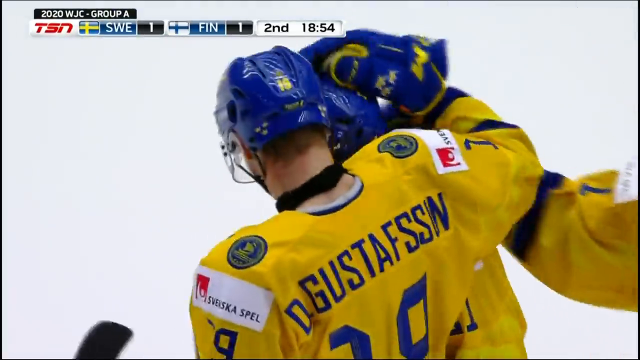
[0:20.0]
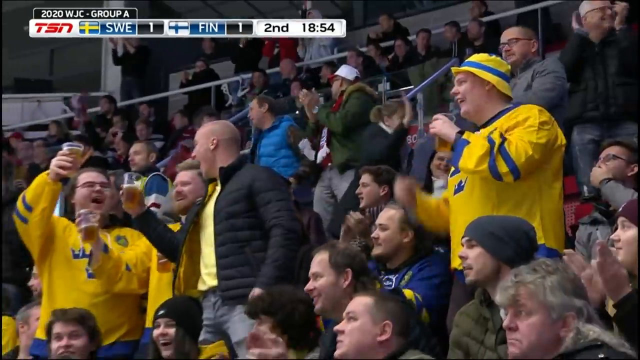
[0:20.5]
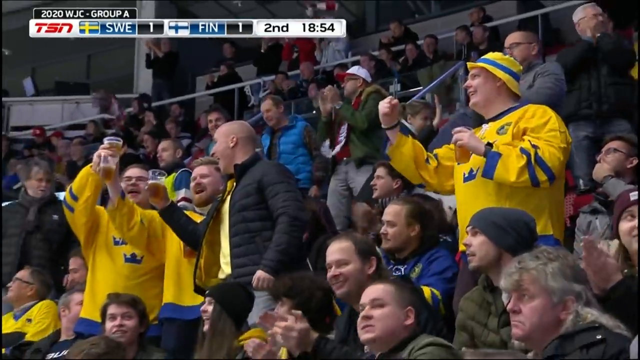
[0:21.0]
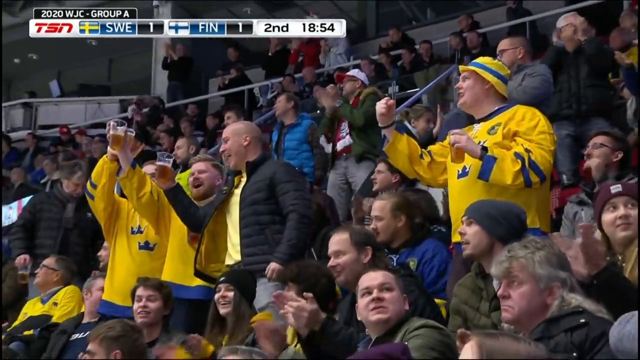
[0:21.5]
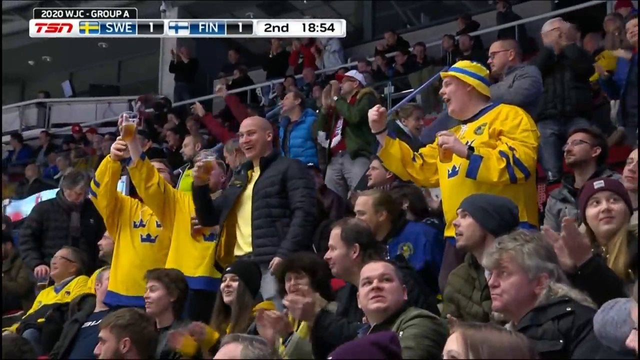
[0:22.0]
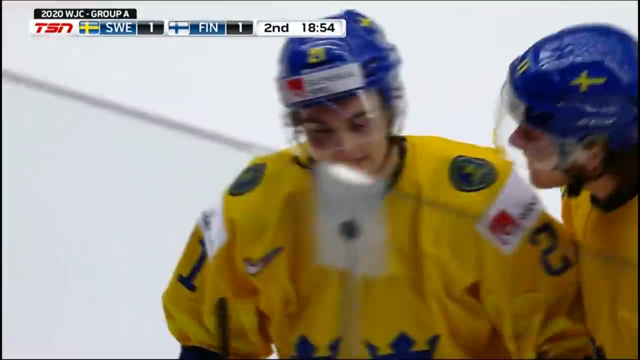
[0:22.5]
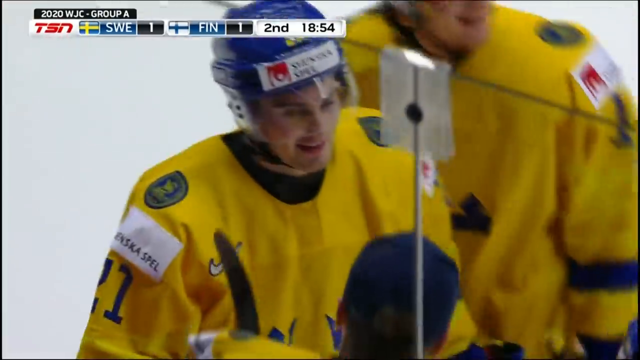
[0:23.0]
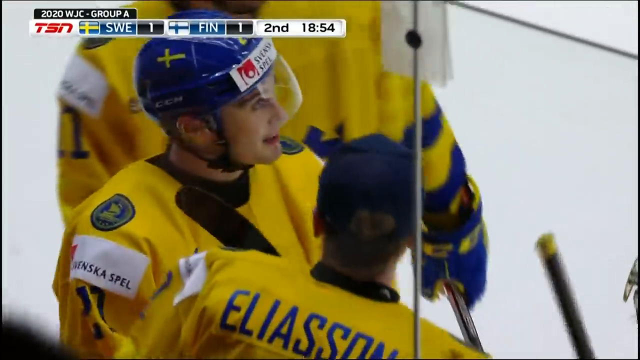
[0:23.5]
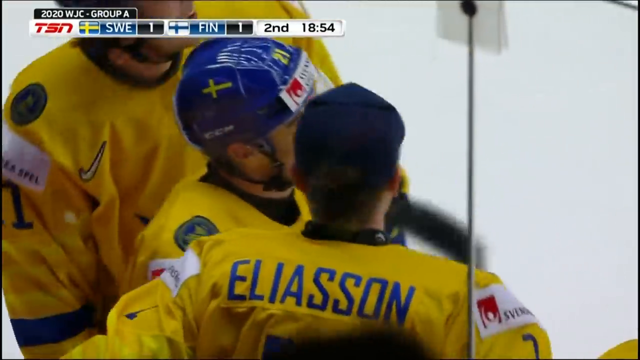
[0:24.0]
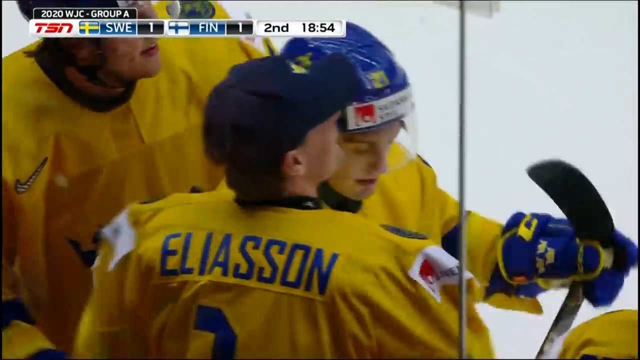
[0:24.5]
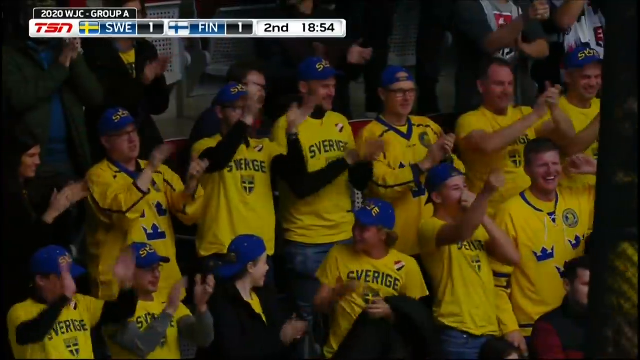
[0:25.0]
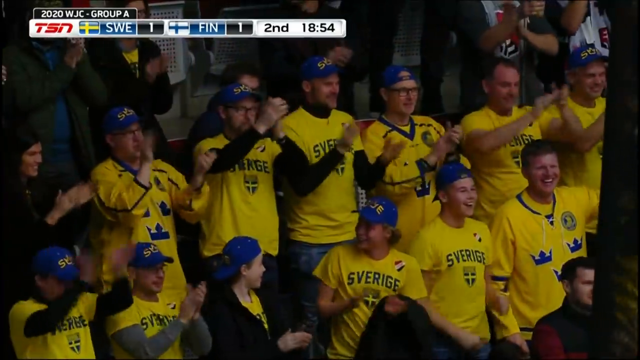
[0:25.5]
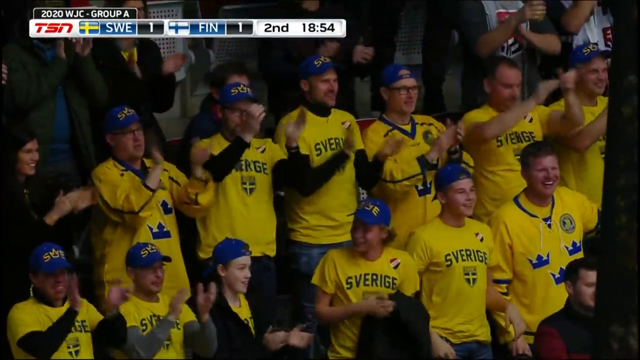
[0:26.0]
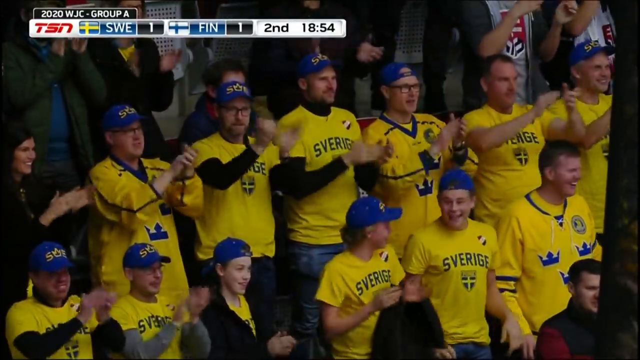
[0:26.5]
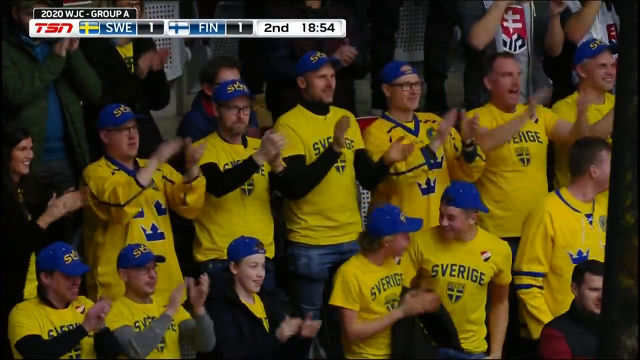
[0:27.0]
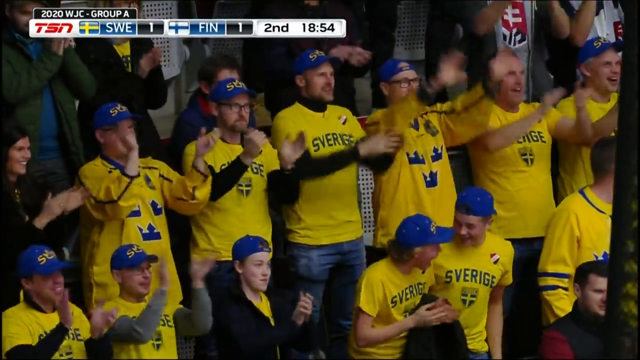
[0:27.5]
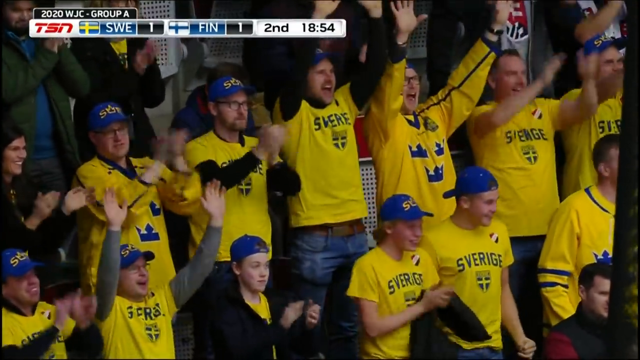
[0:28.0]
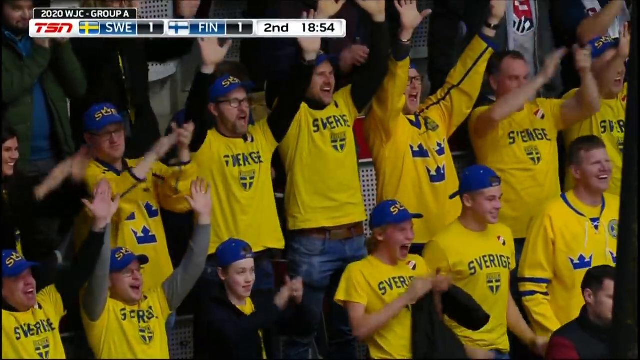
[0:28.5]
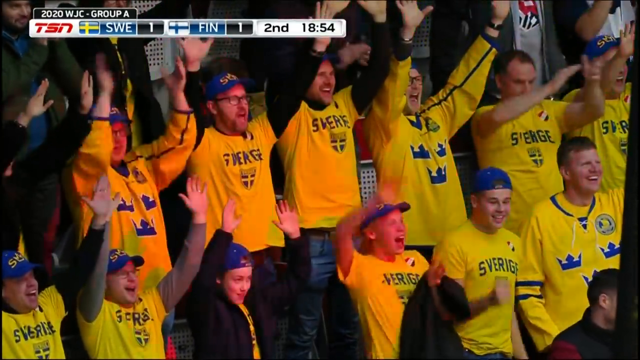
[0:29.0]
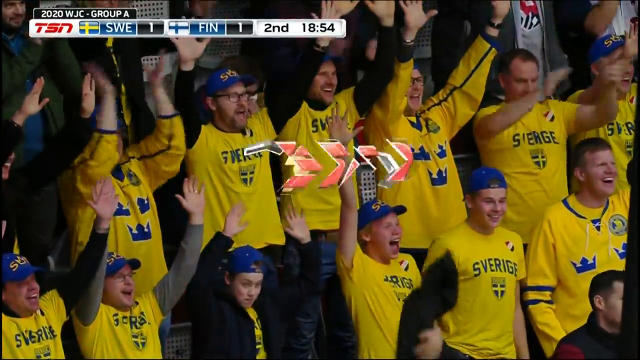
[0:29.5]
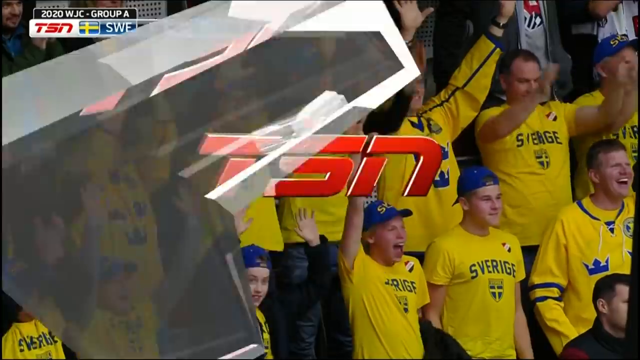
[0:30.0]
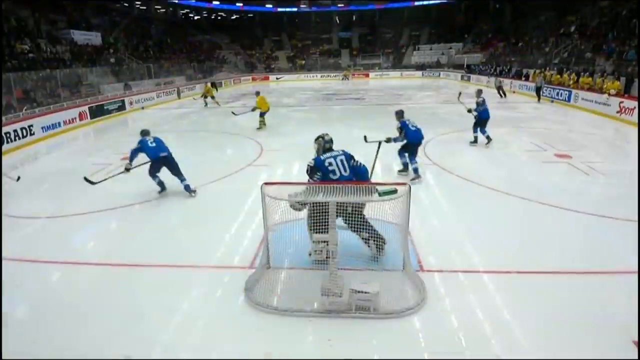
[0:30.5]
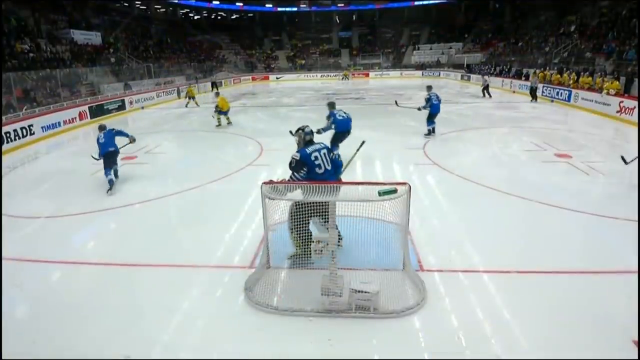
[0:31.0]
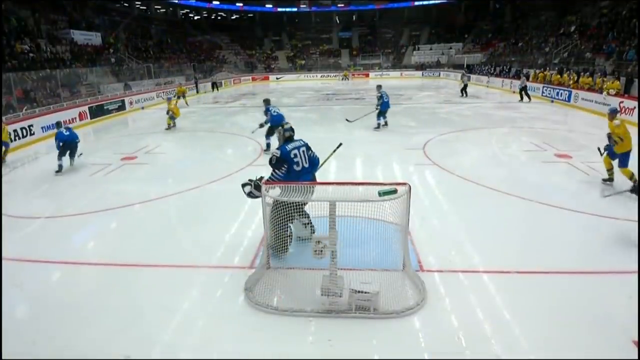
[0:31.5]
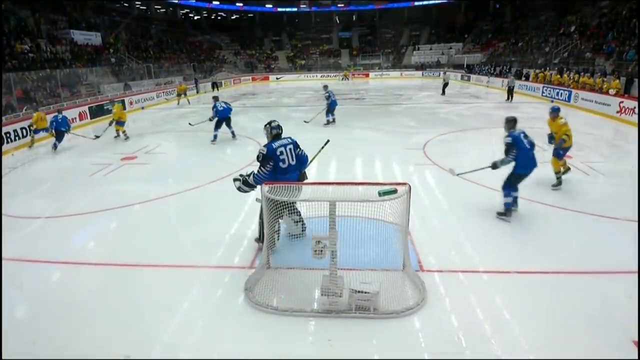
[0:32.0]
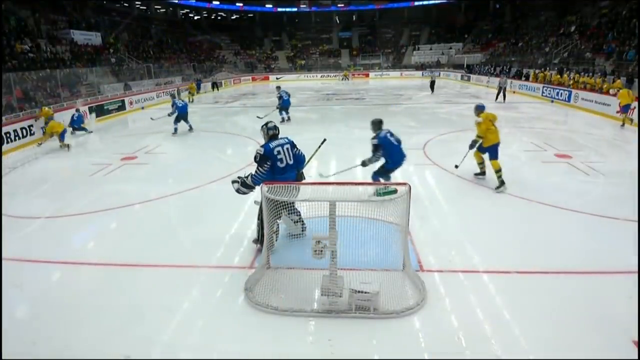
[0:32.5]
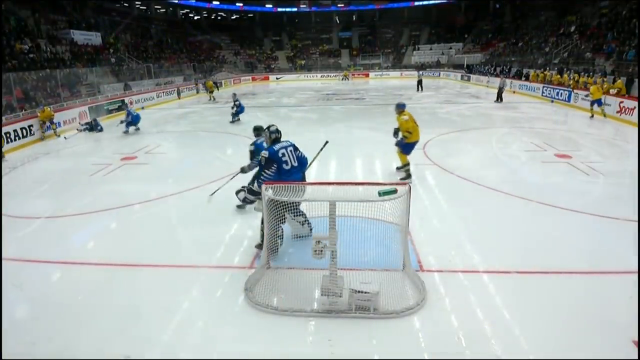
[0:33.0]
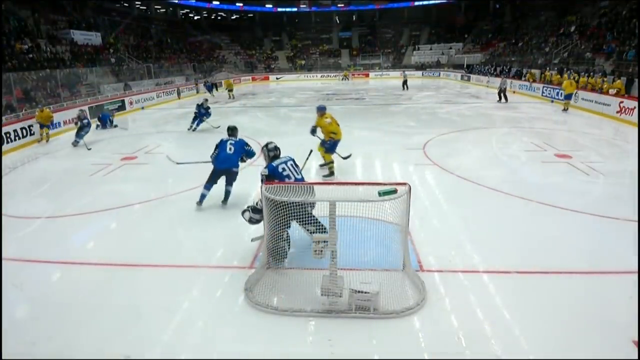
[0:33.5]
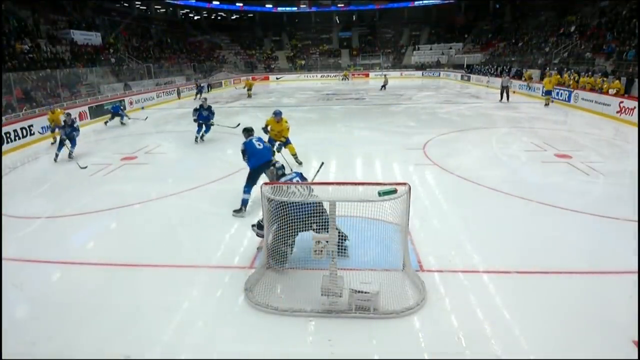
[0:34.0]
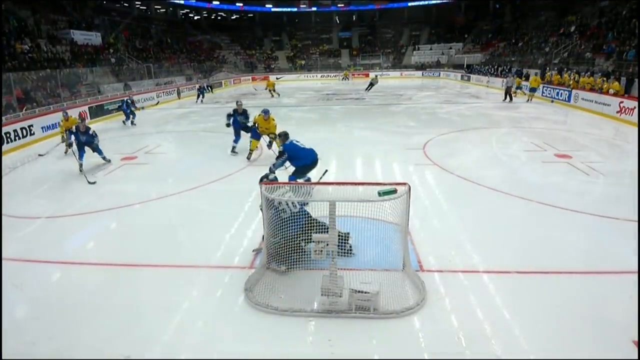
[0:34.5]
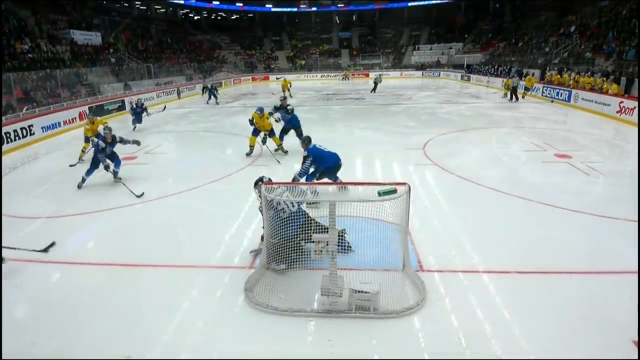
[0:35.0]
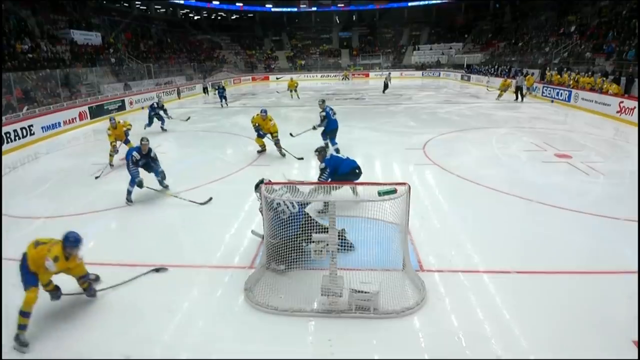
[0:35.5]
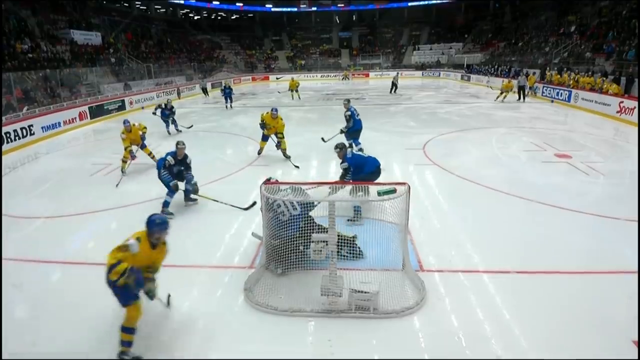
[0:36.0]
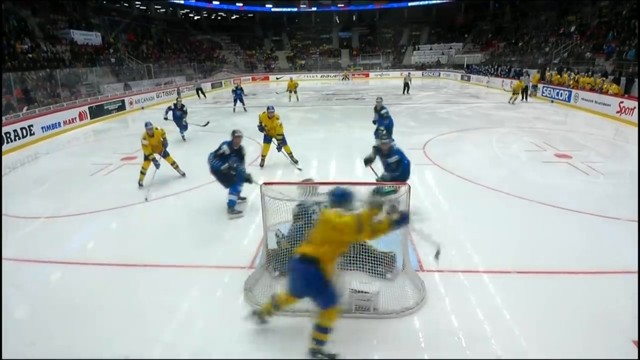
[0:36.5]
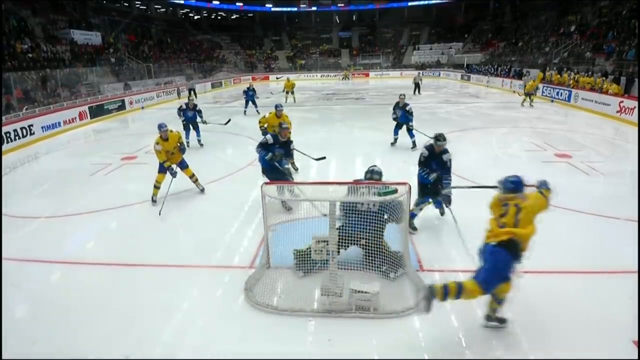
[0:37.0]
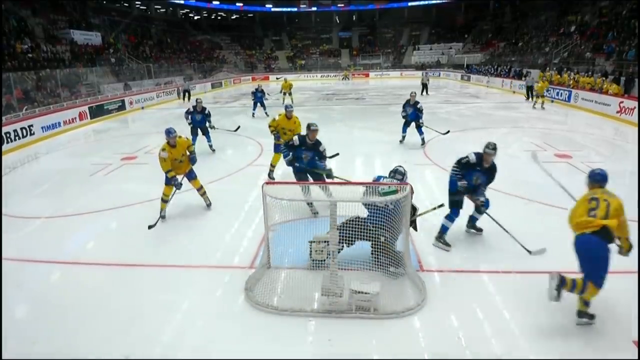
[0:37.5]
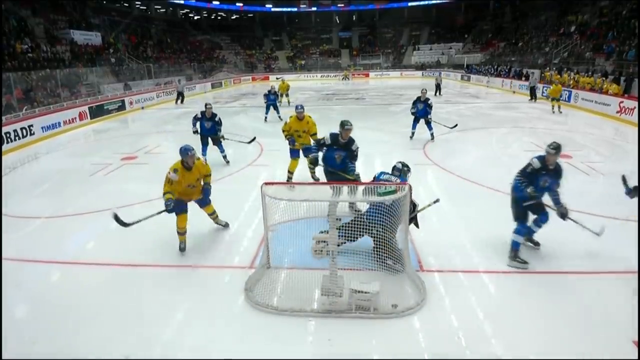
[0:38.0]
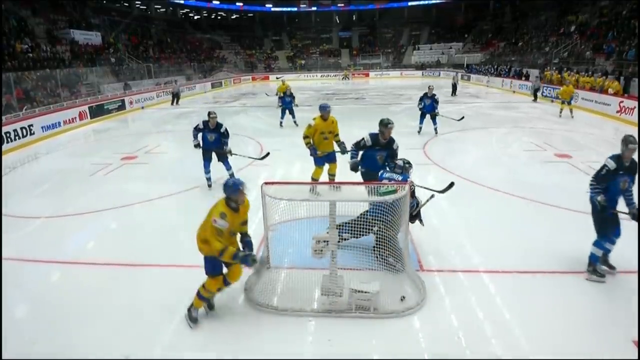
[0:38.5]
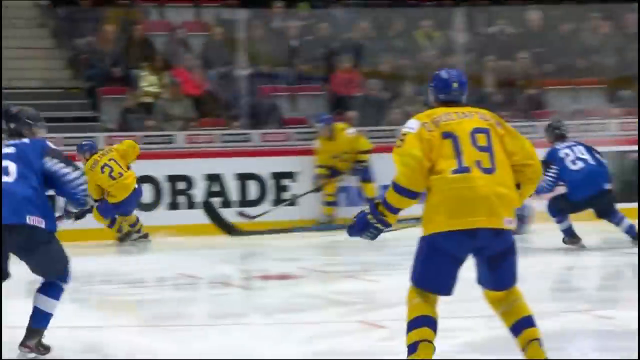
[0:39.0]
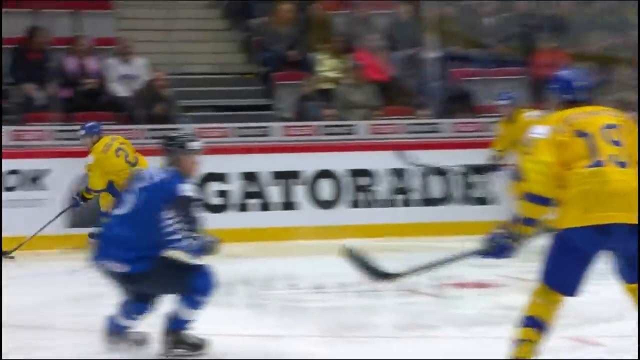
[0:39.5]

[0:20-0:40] The score ticker updates to 1-1 between Sweden and Finland, with 18 minutes and 54 seconds left in the second period. Swedish fans celebrate, many wearing the yellow Sweden jersey with three blue crowns on the front, and many raising their plastic beer cups in a toast. A large group of people in Swedish t-shirts and ball caps fills two rows of the crowd, celebrating and holding their hands up in the air when they see they are on camera. The TSN logo swipes across the screen, and a replay of the goal follows: number 21 gets the puck in the far corner, makes his way along the goal line, cradles the puck in his stick, skates around to the right side of the net and executes the Michigan-type goal above the goalie's right shoulder.